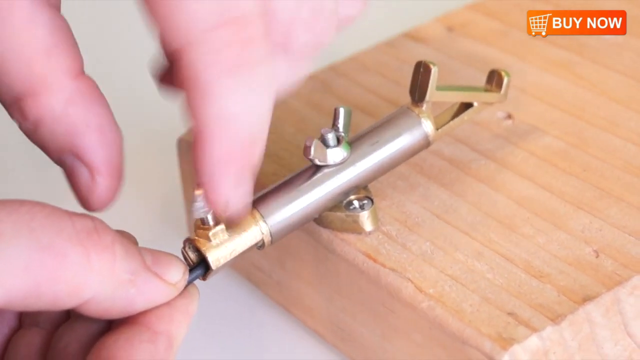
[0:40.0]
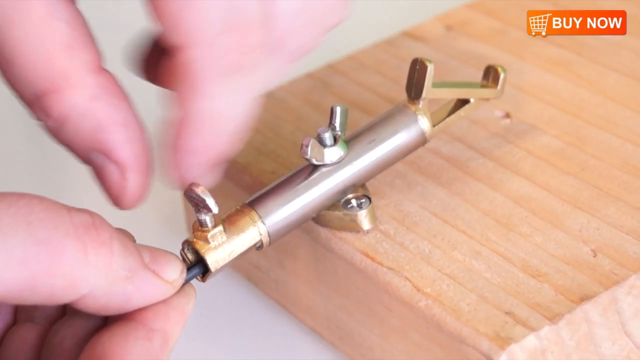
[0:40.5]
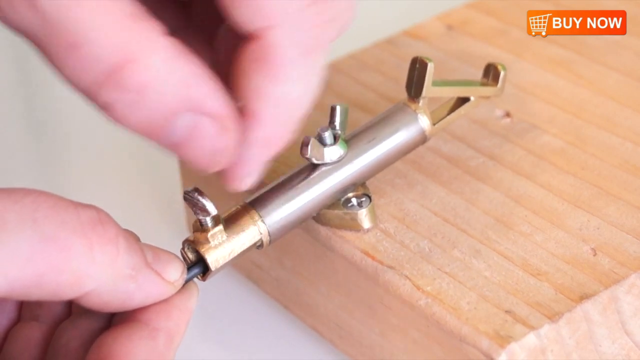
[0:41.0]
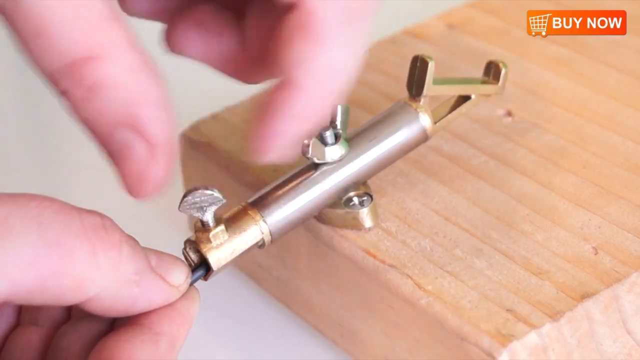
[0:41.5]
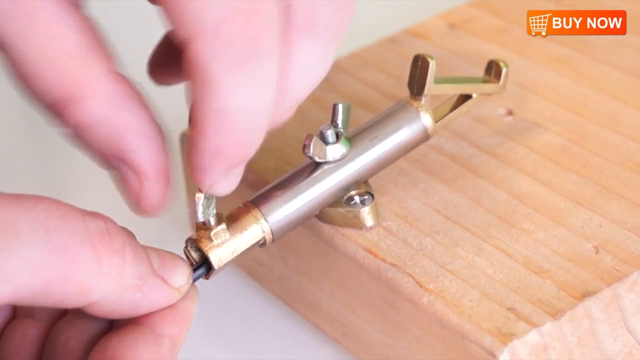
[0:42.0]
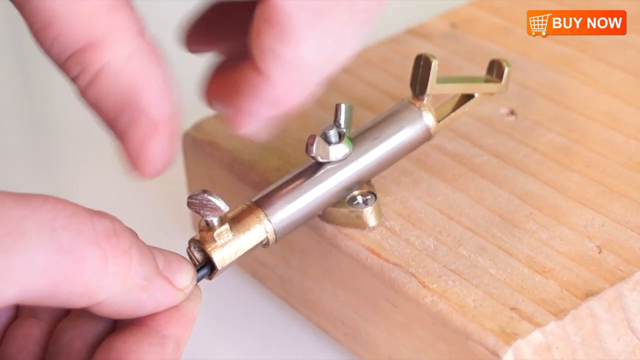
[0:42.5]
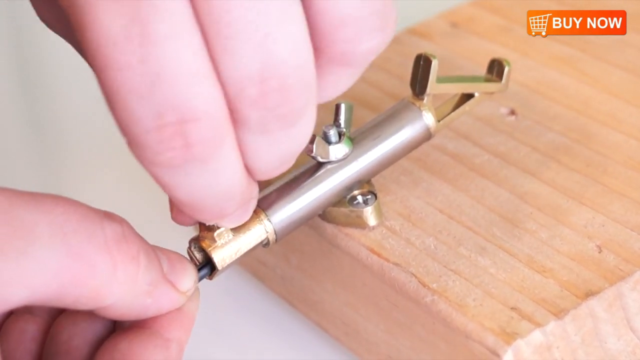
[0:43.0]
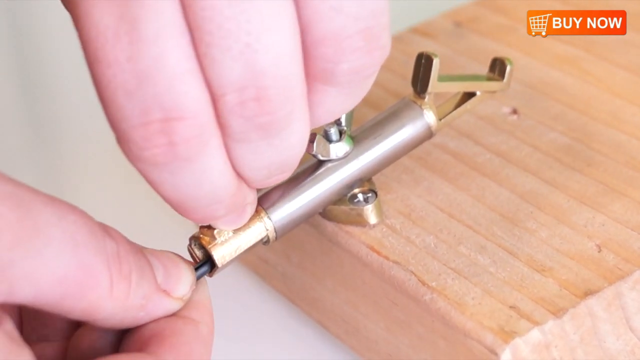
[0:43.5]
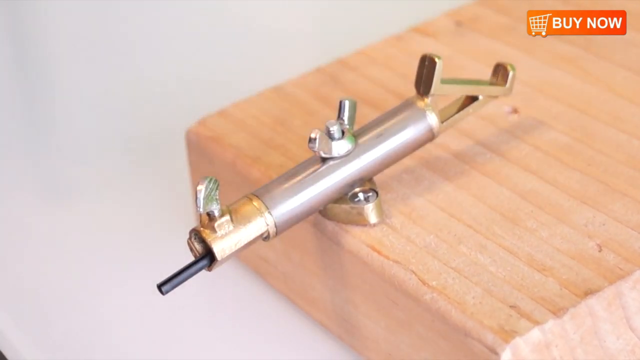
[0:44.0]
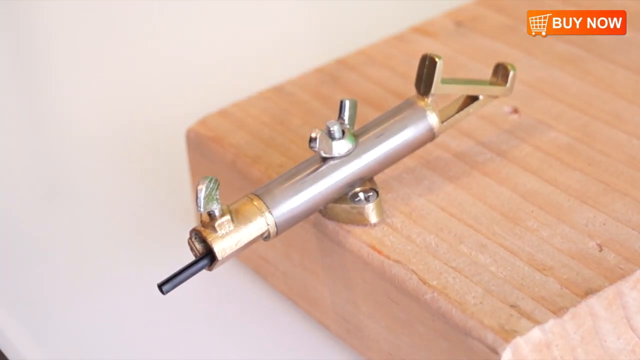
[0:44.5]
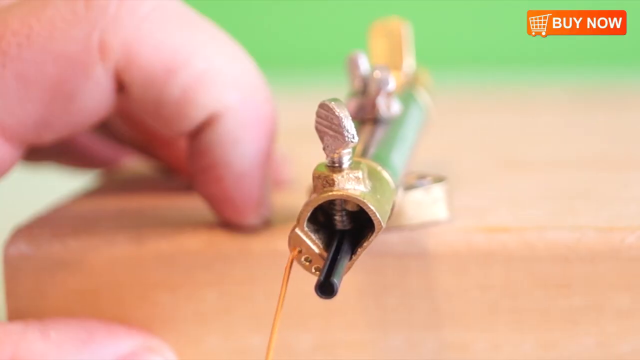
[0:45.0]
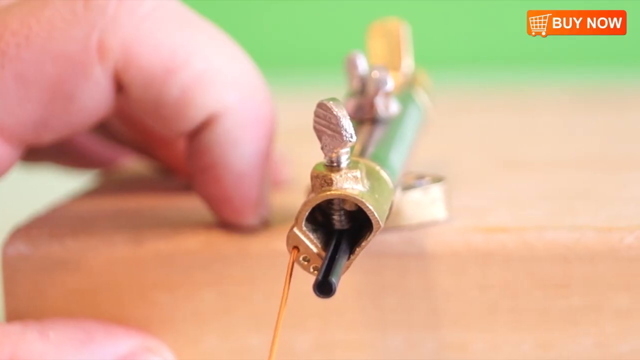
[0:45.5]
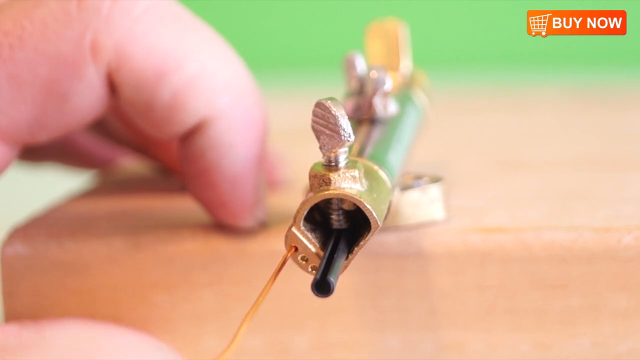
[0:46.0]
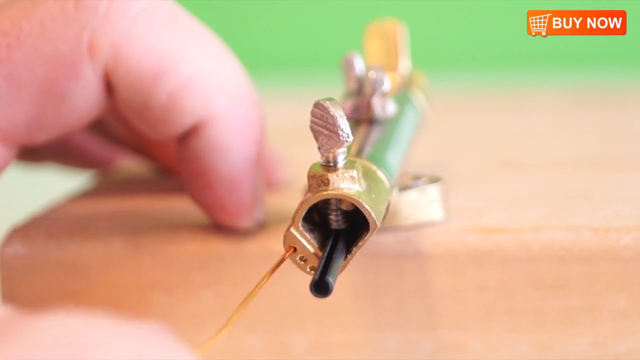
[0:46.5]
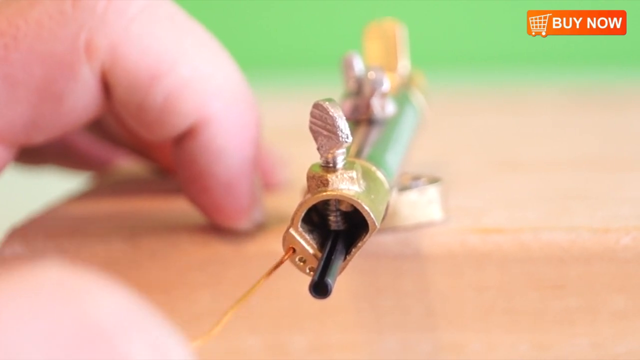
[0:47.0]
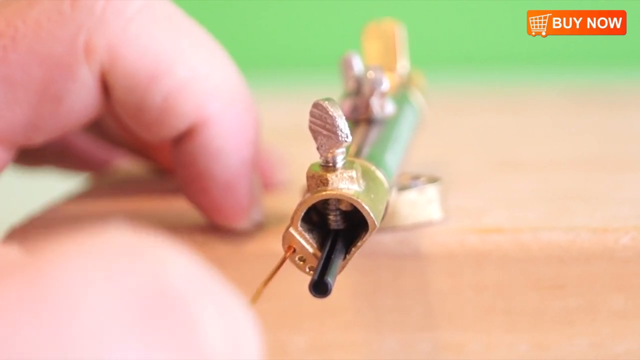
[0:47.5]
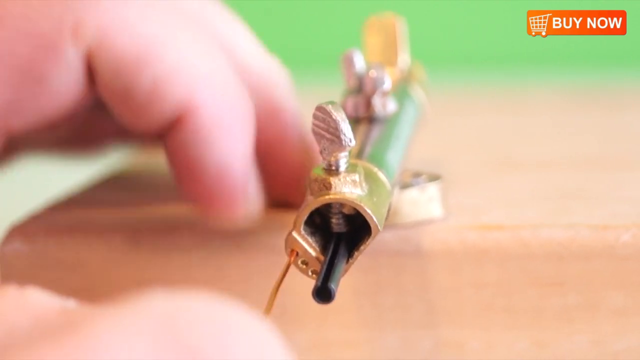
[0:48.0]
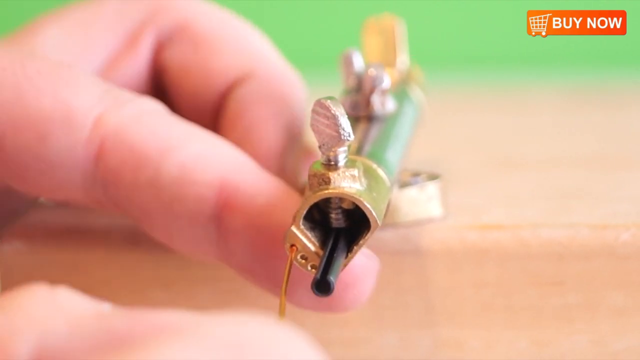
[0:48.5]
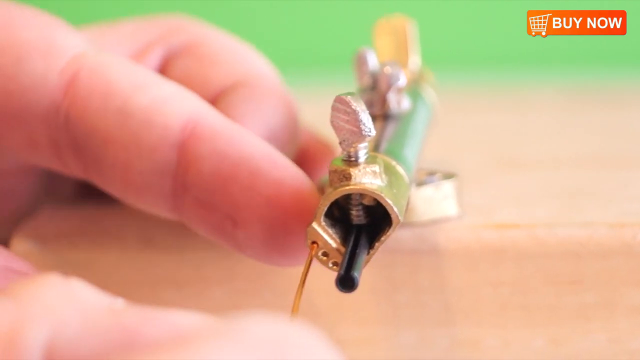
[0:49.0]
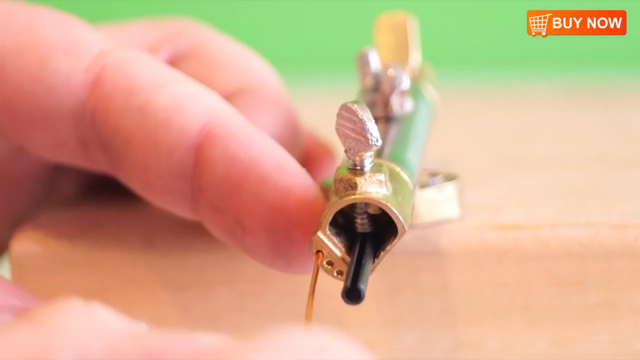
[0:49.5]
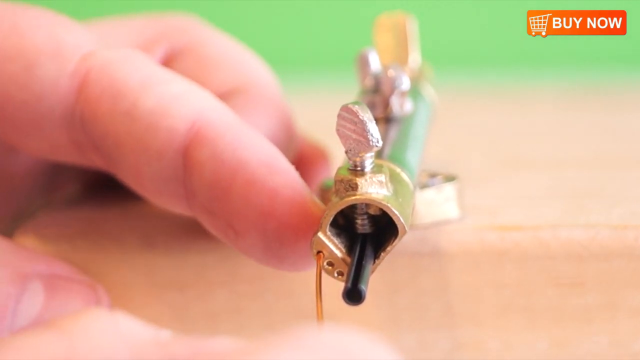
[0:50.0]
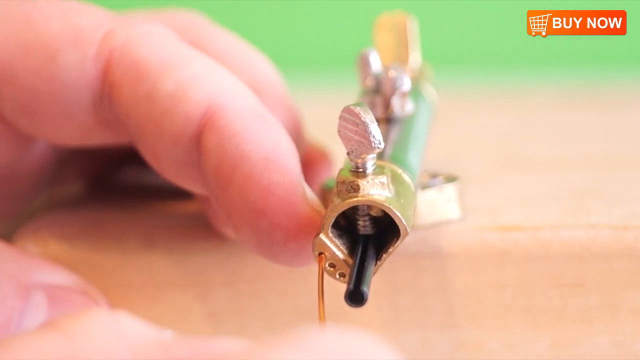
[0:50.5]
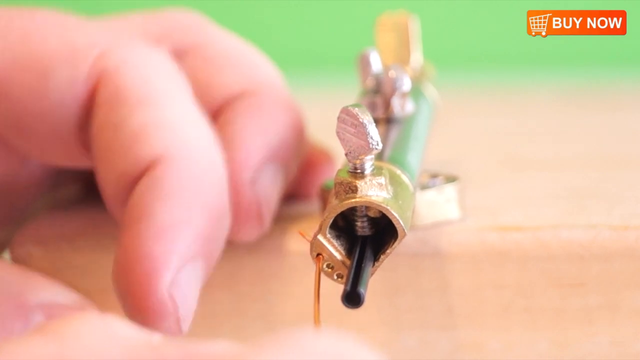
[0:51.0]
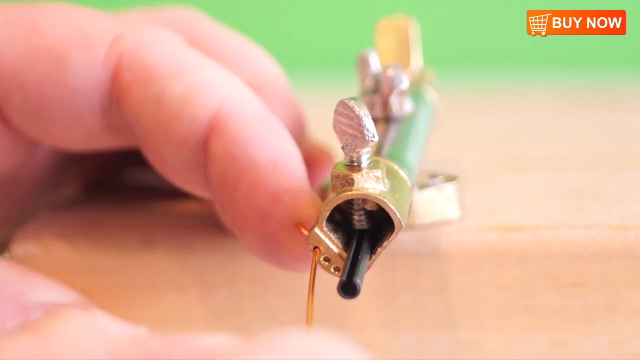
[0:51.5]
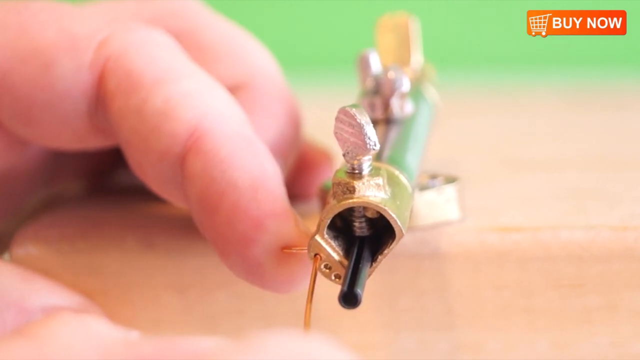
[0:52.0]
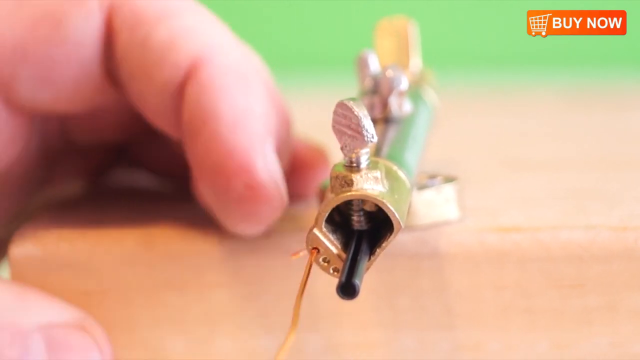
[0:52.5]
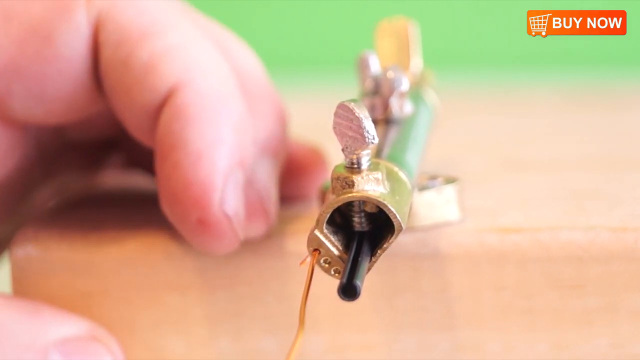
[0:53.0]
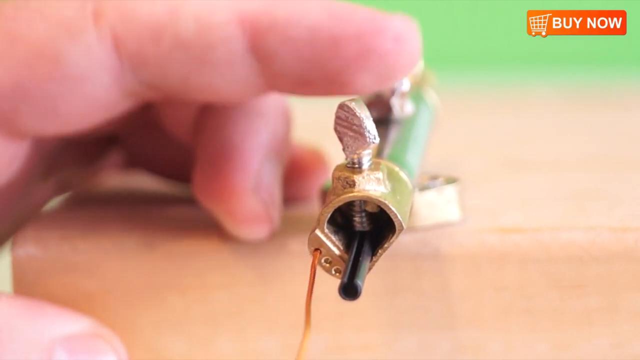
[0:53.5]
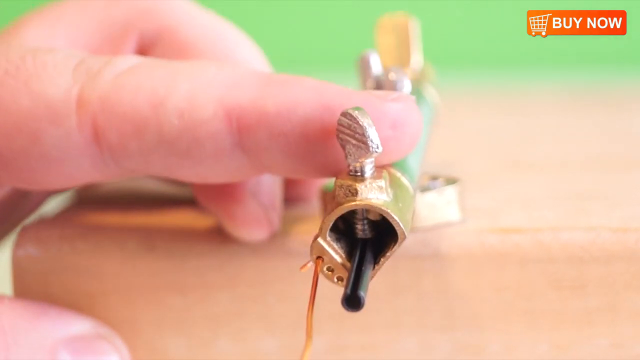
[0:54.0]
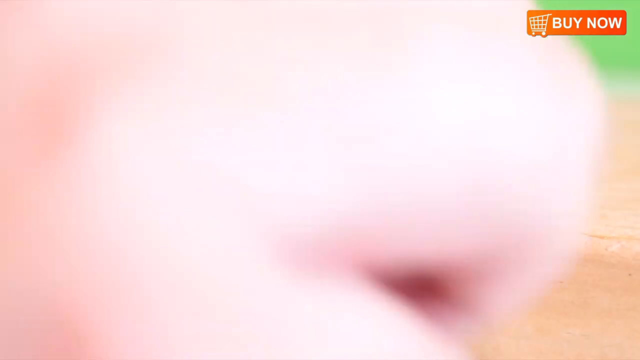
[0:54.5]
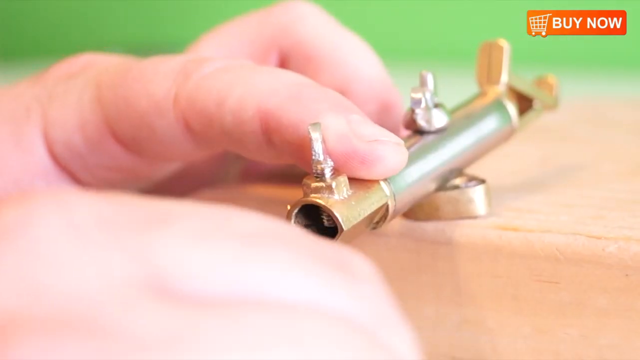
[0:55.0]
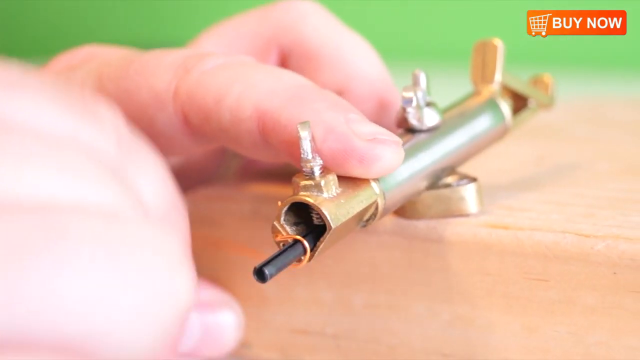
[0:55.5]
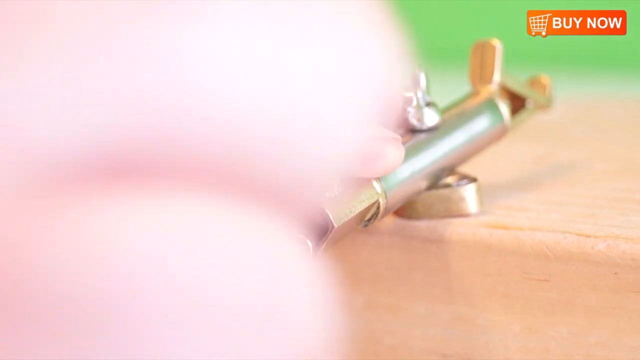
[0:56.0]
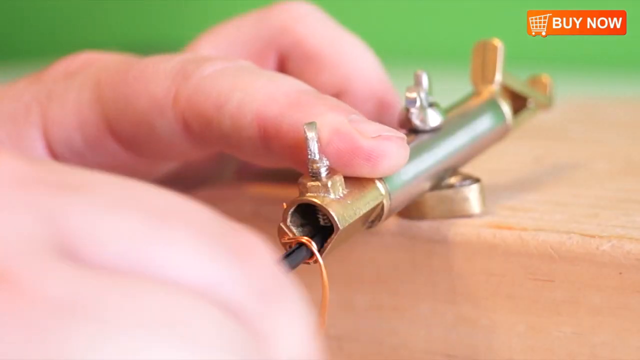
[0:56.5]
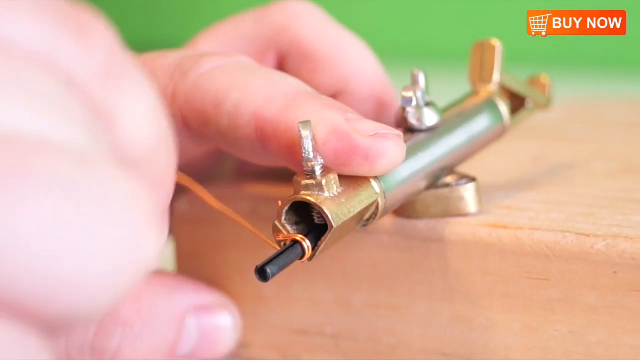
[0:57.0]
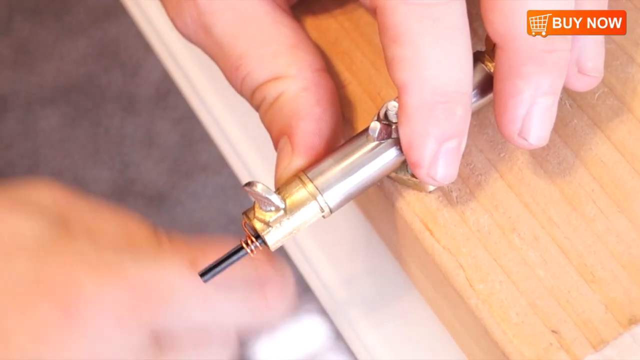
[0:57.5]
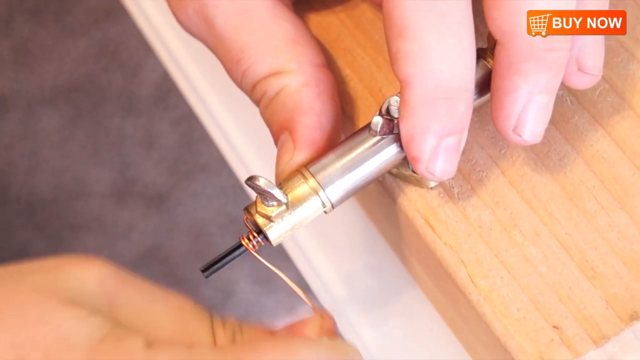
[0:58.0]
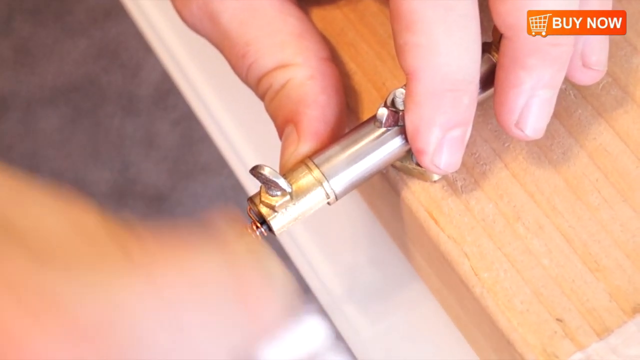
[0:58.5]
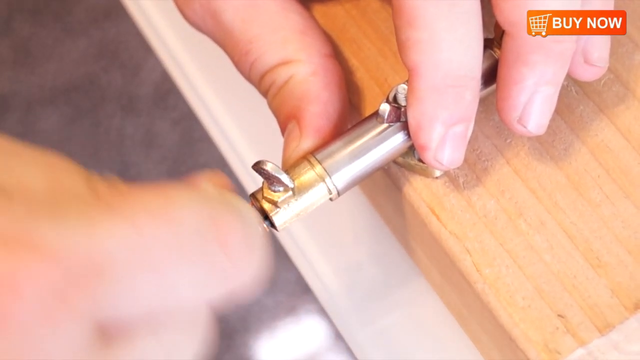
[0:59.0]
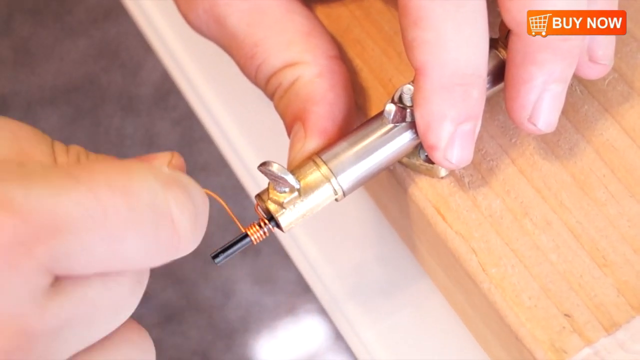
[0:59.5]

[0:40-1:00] The man tightens another little thing and puts in something that looks like graphite. There are tiny holes on the bottom, and he appears to put some kind of brass thing through one of the holes and then bends it. He wraps it around the thin metal thing that looks like graphite from the inside of a pencil but definitely looks like some kind of metal or plastic. "Buy now" is still in the upper right of the screen, only his hands are shown, and the camera remains very steady while the wood block moves a little. Part of the video has a green background, and there appears to be some kind of concrete floor, so he is perhaps in some type of warehouse. The product is shown in good quality, and some of the wood block seems a little blurred.